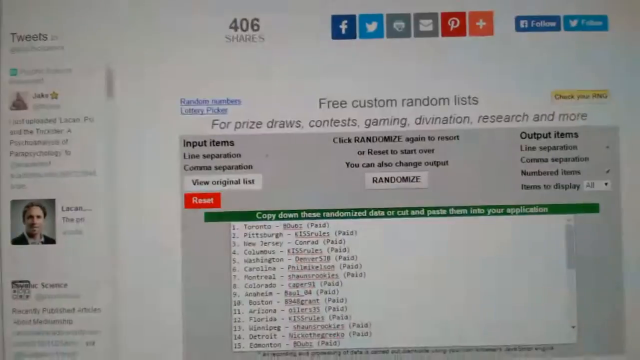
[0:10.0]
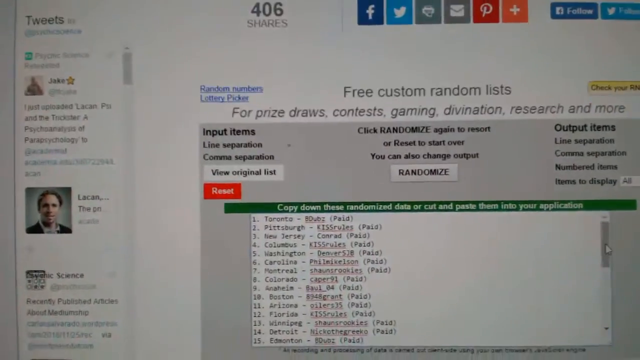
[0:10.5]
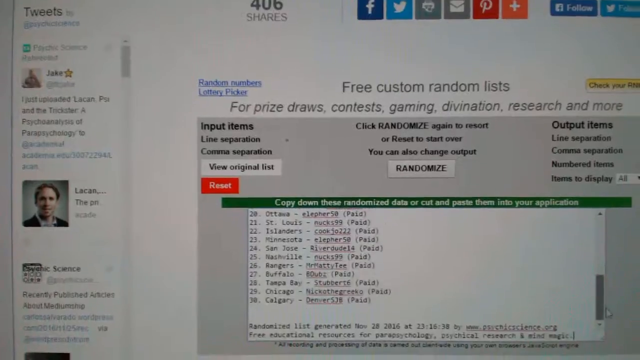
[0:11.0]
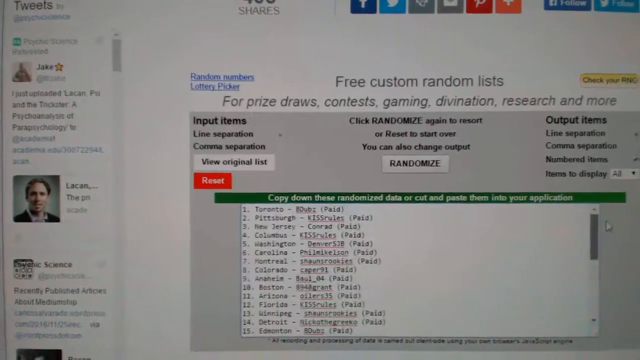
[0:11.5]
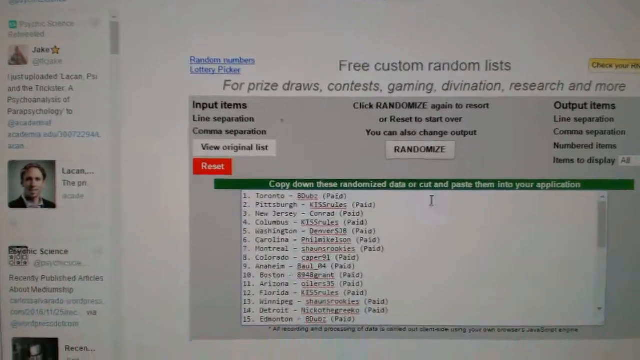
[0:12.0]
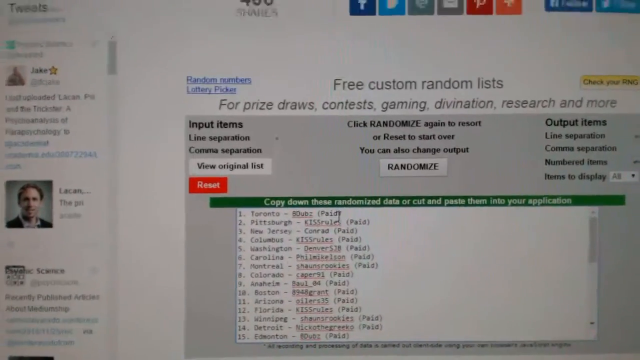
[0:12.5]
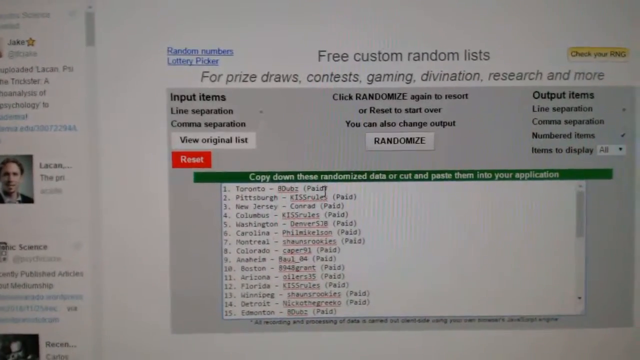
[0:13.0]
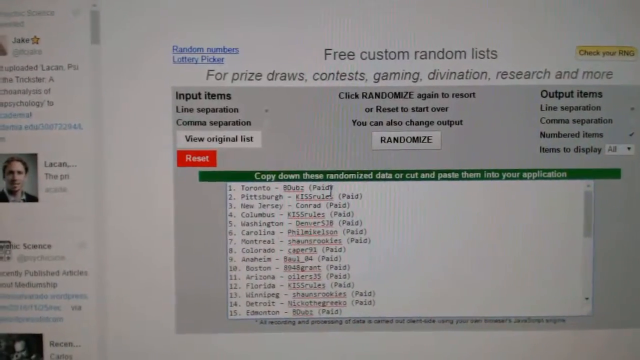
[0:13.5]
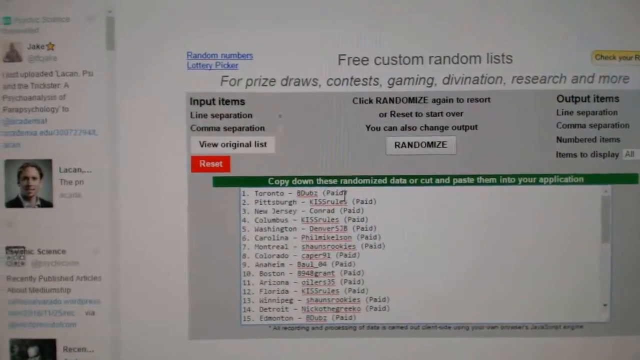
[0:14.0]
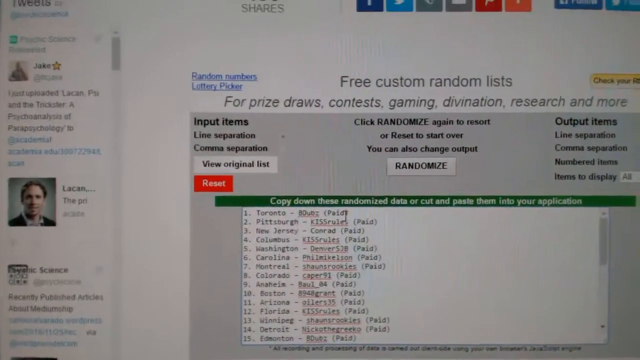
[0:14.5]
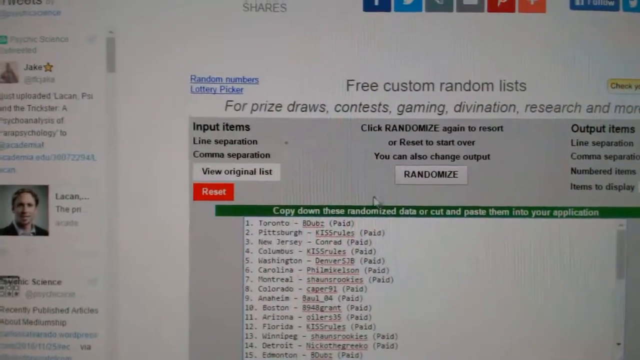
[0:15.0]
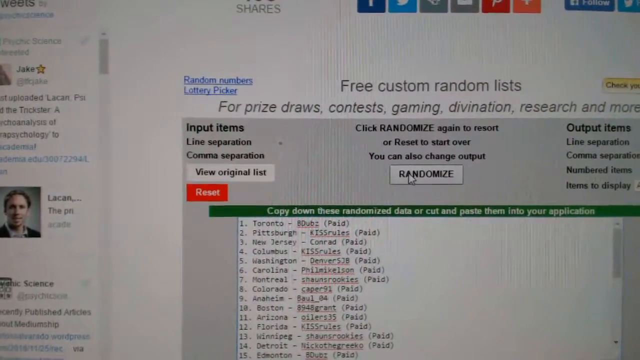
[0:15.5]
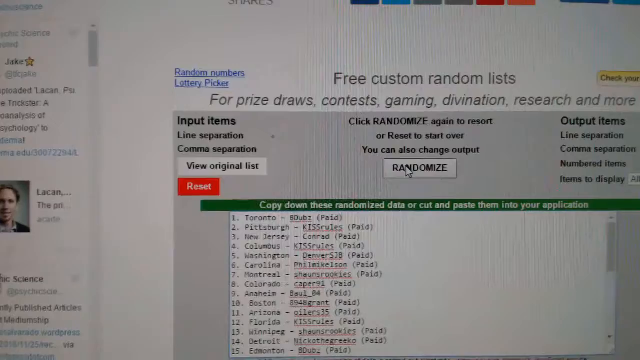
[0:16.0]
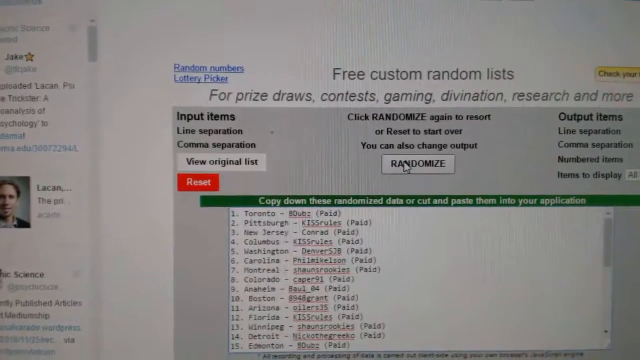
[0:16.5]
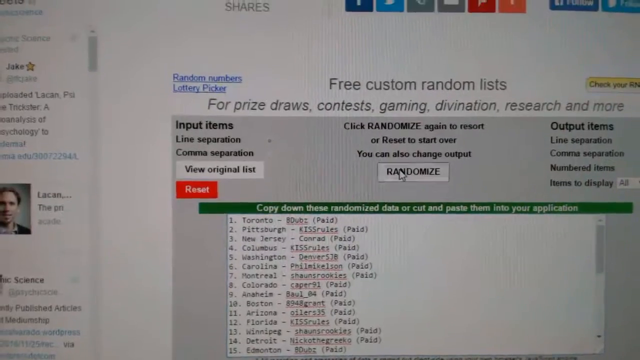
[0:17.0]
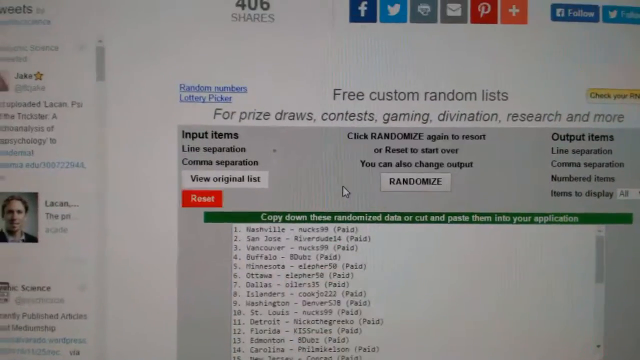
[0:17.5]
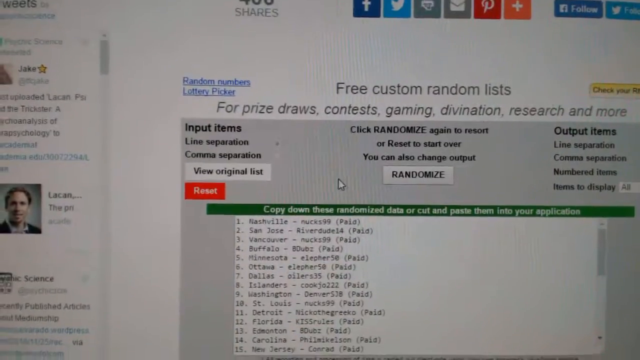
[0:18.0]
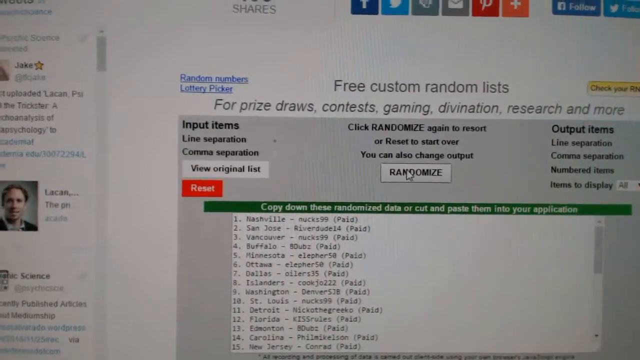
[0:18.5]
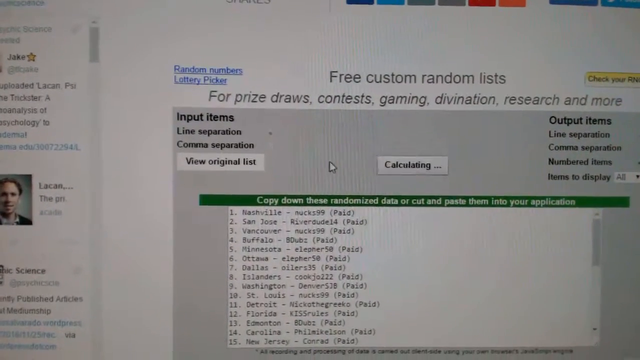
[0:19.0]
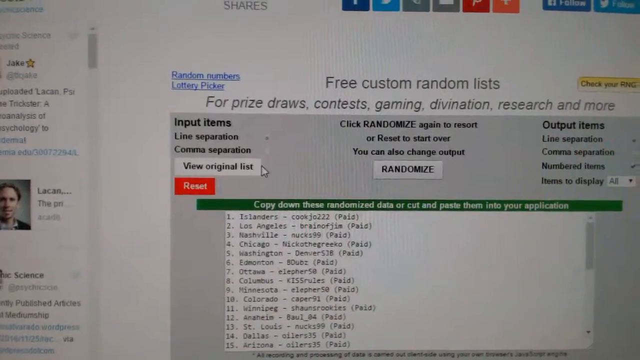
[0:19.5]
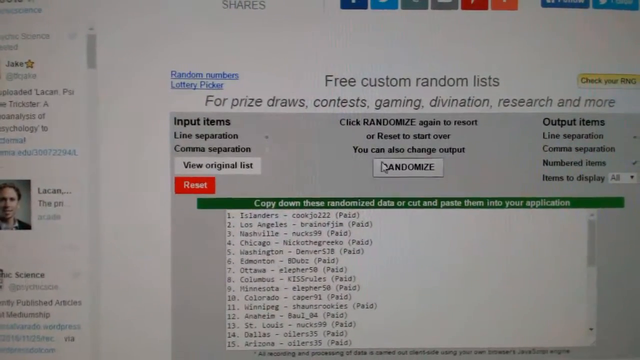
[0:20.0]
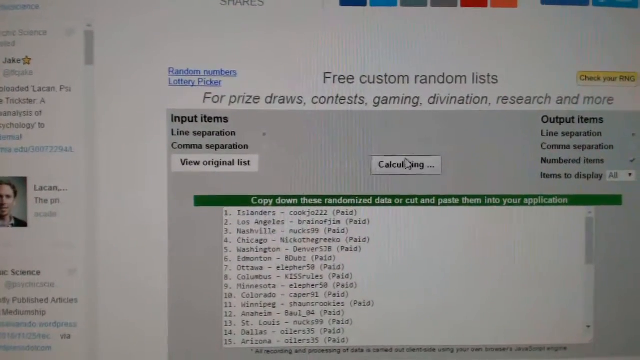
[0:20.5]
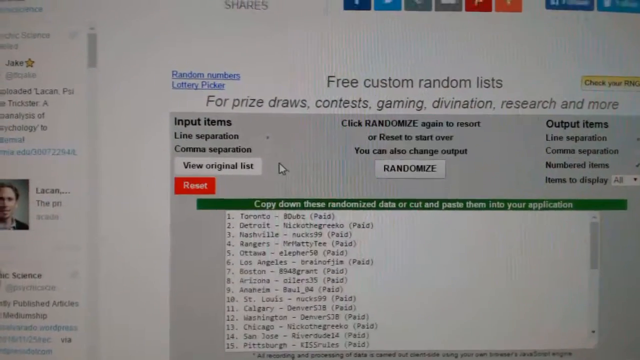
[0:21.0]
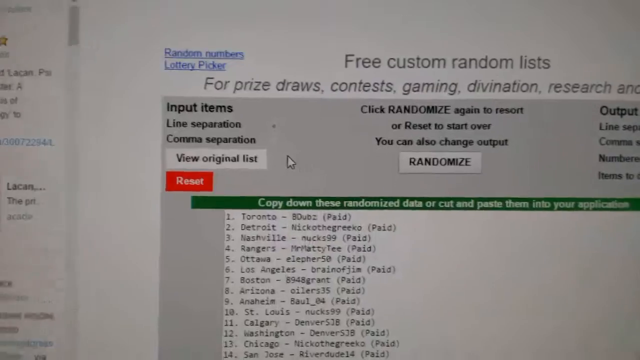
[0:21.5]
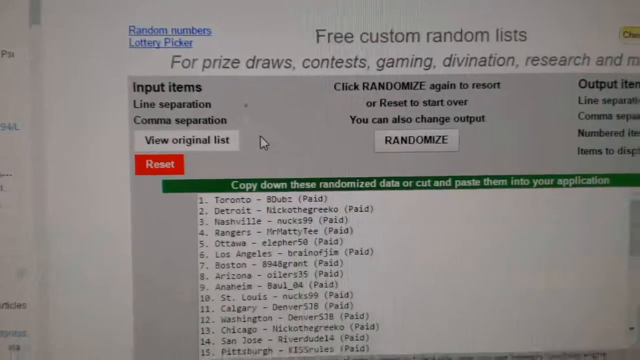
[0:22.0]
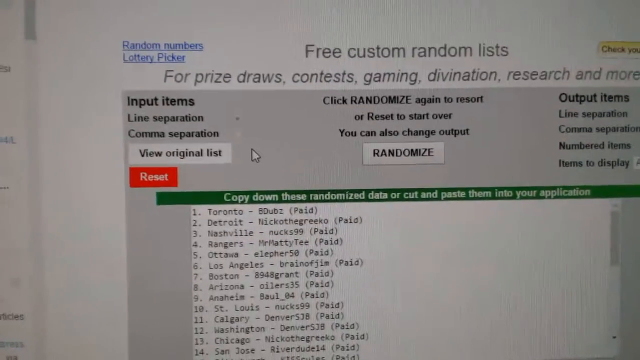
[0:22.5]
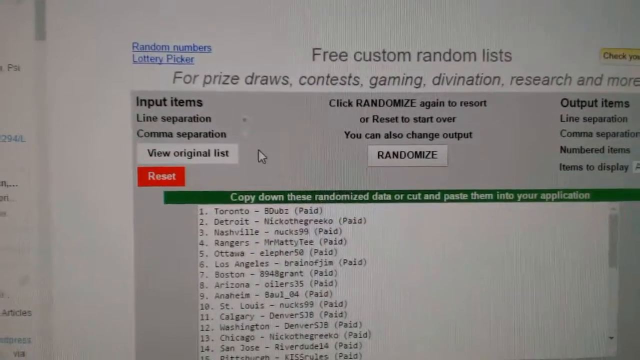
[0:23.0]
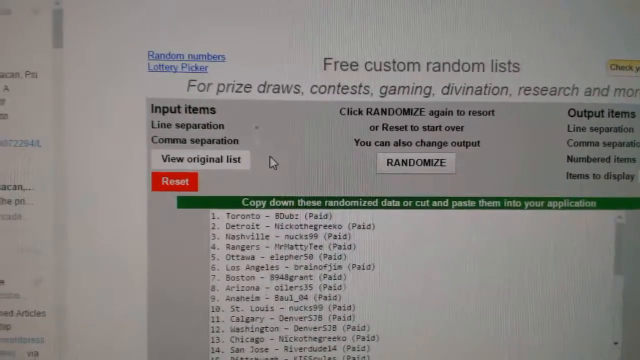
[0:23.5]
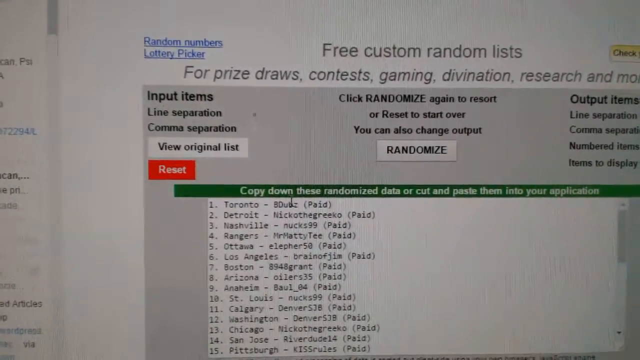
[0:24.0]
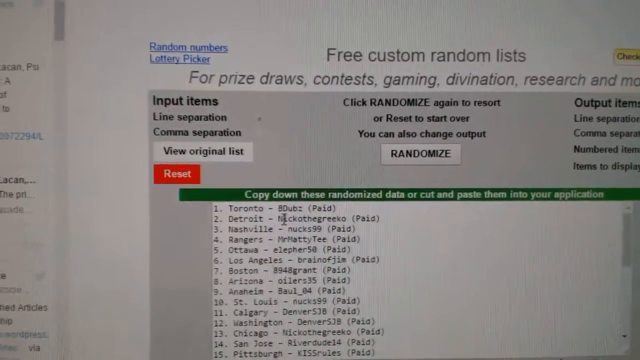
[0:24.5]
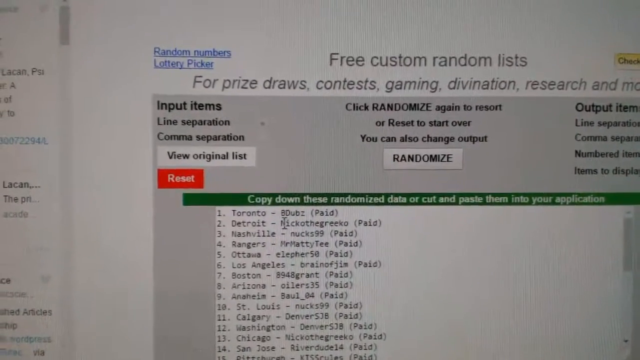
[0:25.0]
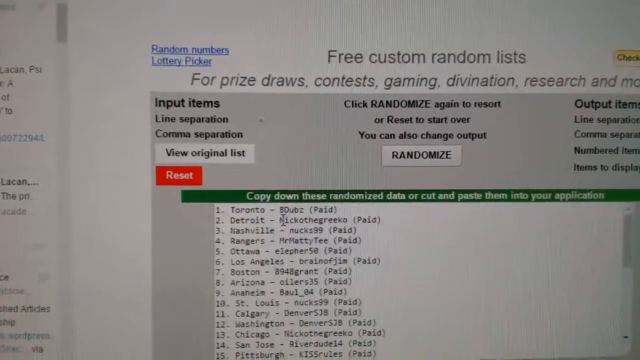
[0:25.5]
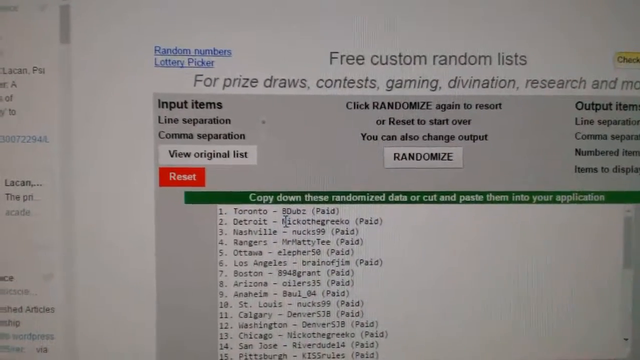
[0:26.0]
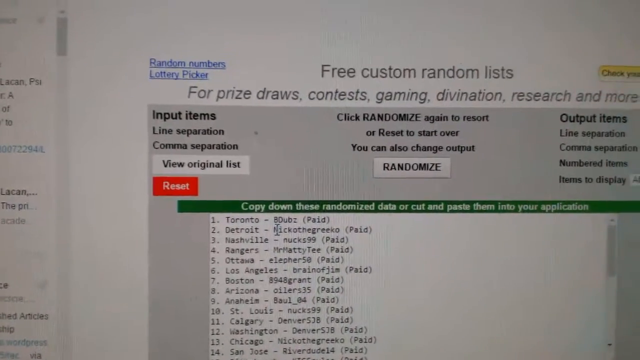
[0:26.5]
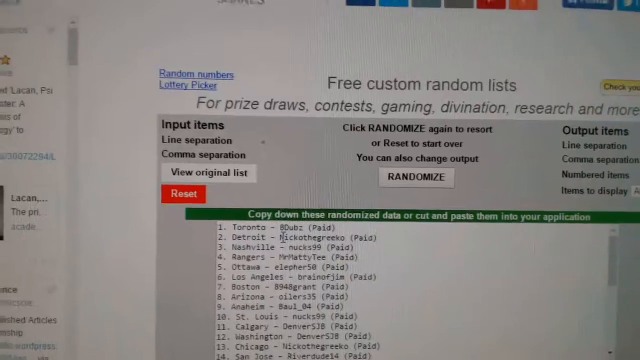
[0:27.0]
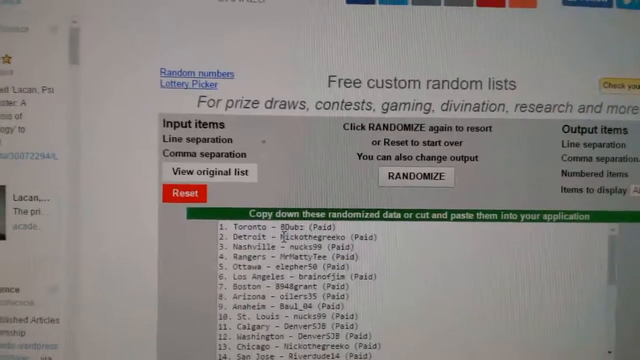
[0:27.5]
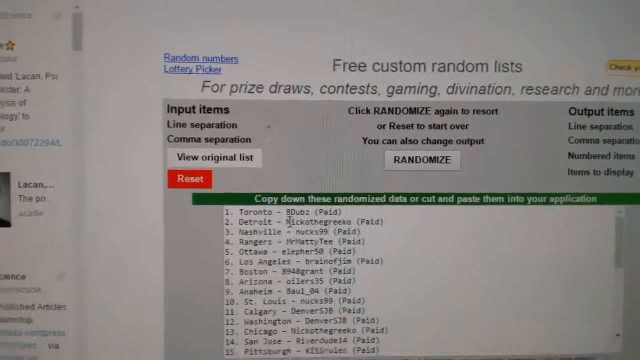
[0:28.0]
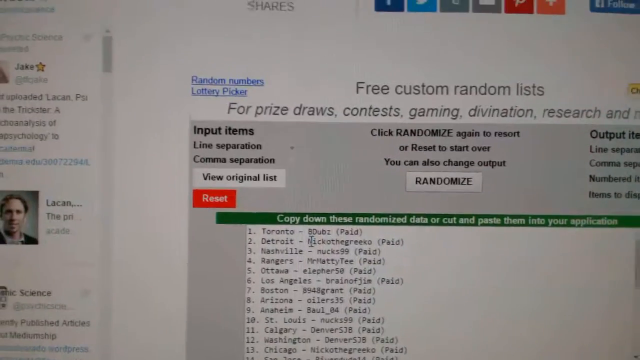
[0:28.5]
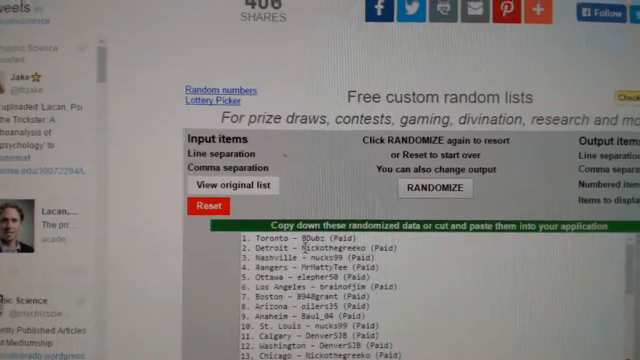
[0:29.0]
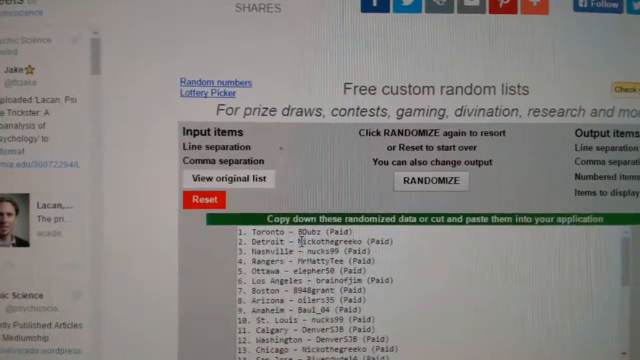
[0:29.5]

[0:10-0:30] The final page shows their website, "free custom random lists." It looks like an older website, with Facebook, Twitter, Pinterest and a couple of others, and Facebook follow buttons at the top. The background is white. The left-hand side has a slider and a tab, one of which has an inset picture of somebody, possibly a CEO, and the text "free custom random lists." The main screen shows a list of people whose order is continuously changing, apparently being randomized. There are different options for how to randomize the lists, though the text is hard to read. Testimonials are in the left-hand column. There are input items, a way to randomize, and output items among the choices on the website. The left-hand side is more of an introduction of who they are.